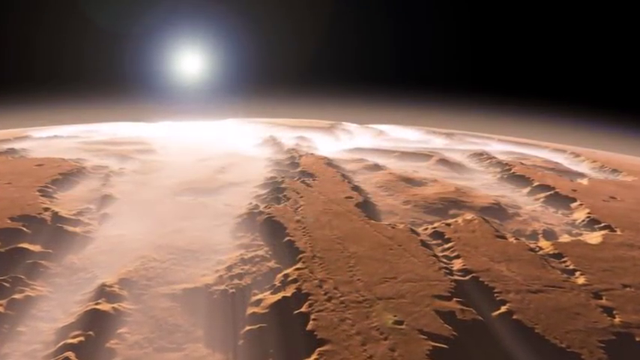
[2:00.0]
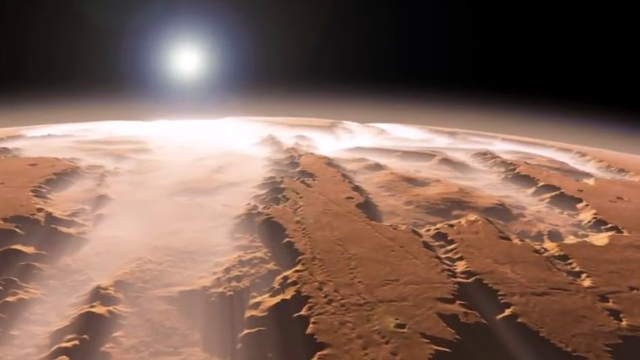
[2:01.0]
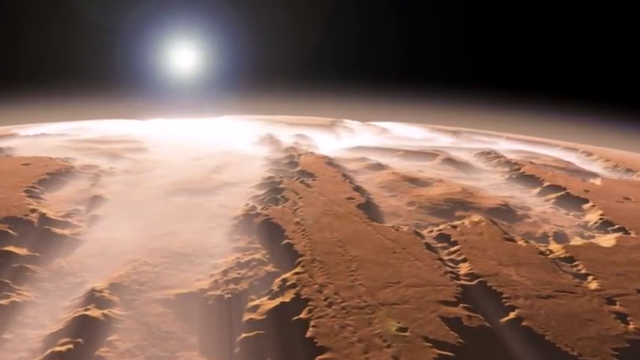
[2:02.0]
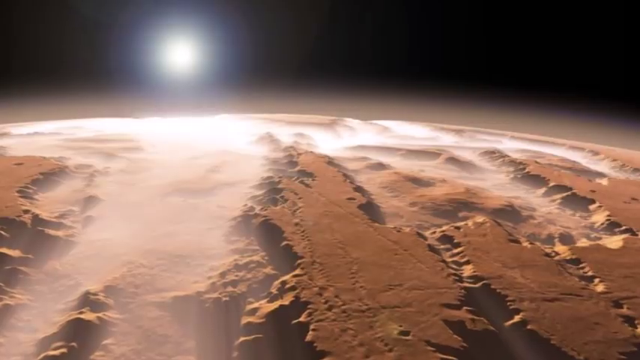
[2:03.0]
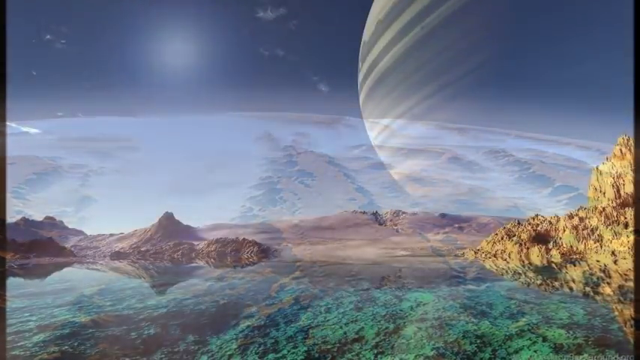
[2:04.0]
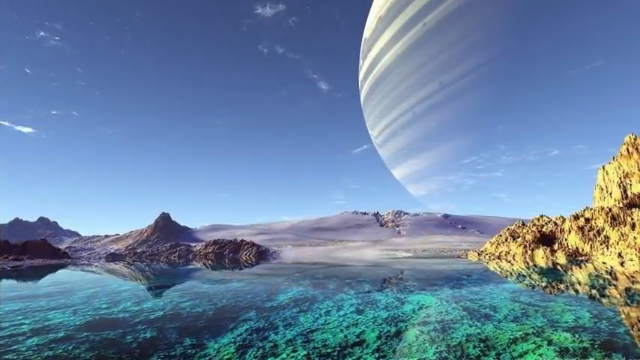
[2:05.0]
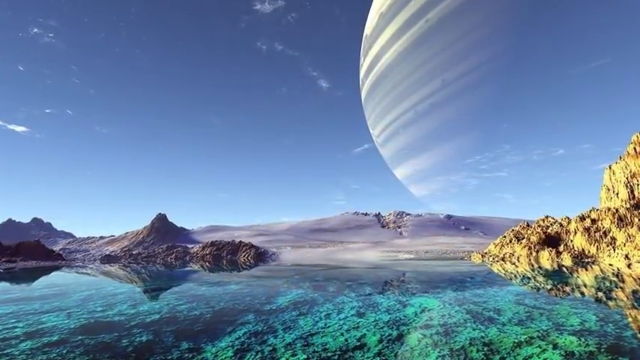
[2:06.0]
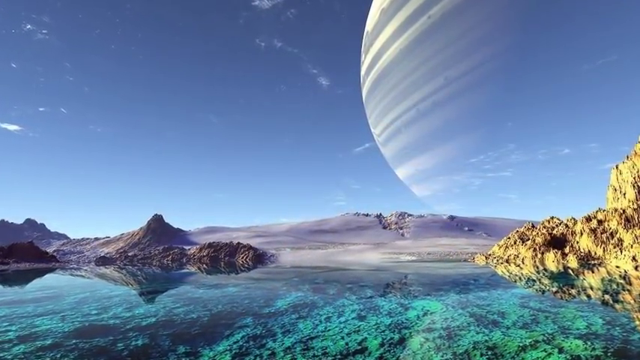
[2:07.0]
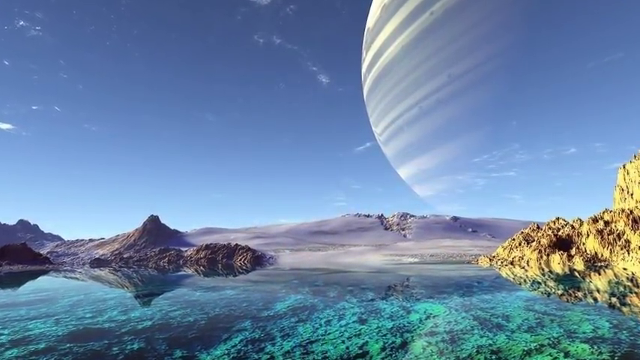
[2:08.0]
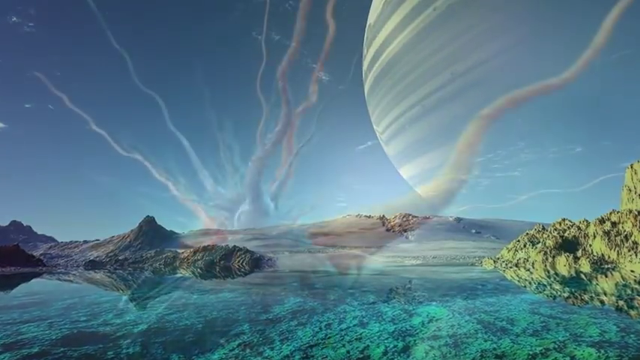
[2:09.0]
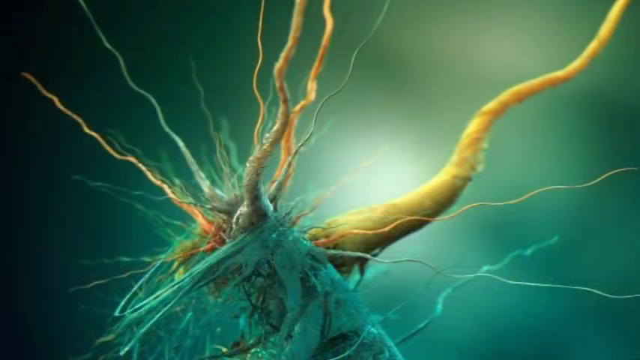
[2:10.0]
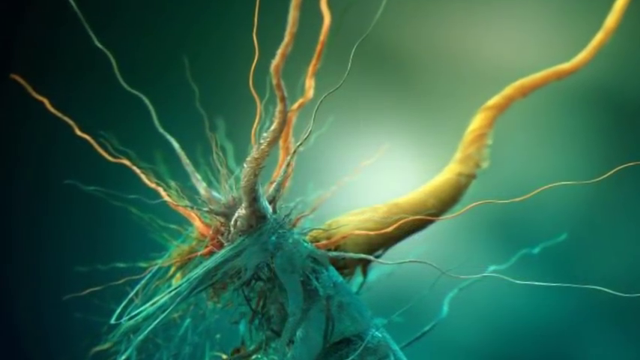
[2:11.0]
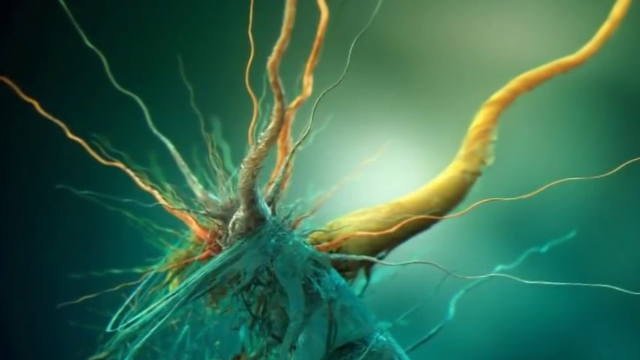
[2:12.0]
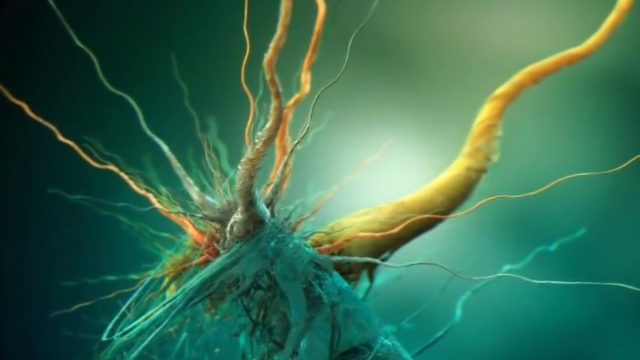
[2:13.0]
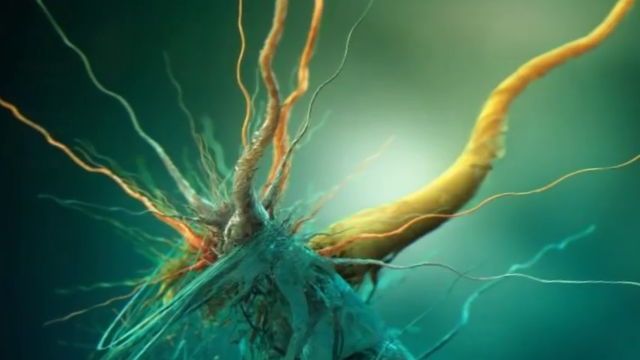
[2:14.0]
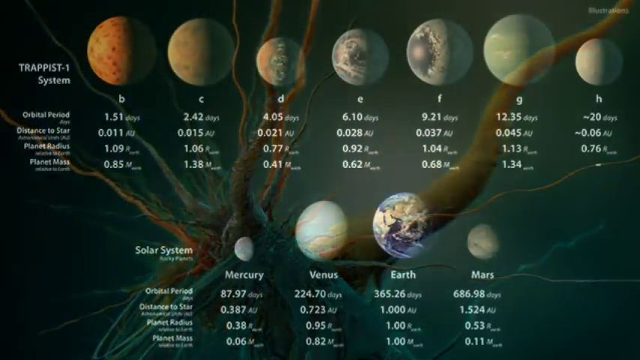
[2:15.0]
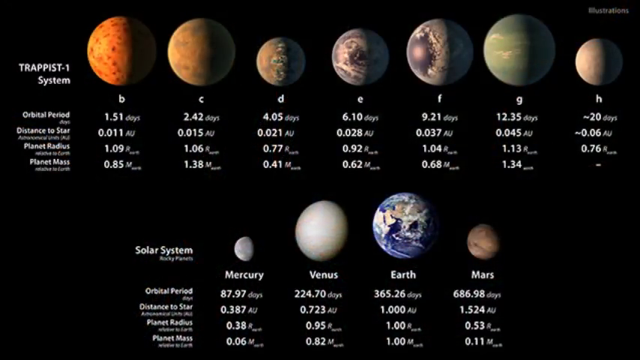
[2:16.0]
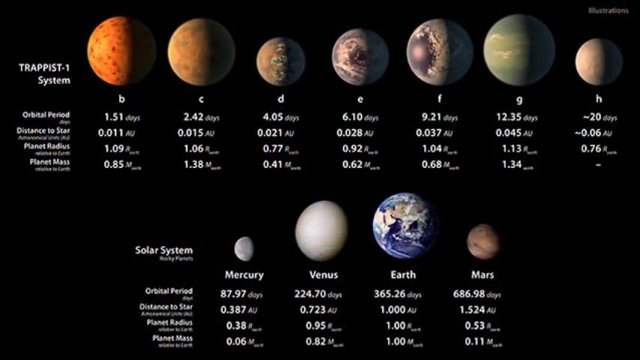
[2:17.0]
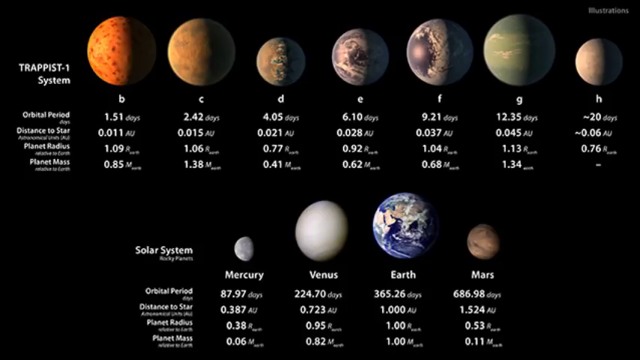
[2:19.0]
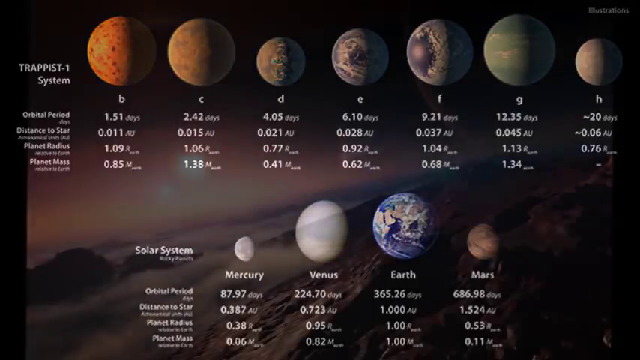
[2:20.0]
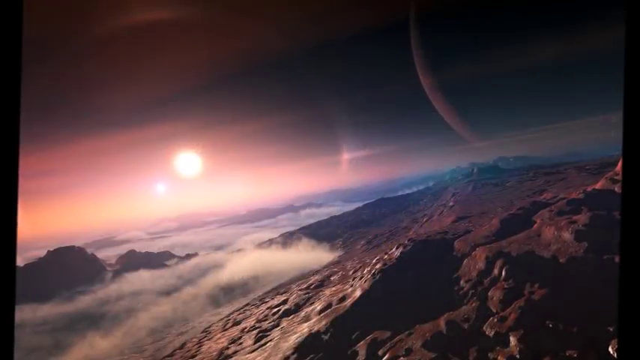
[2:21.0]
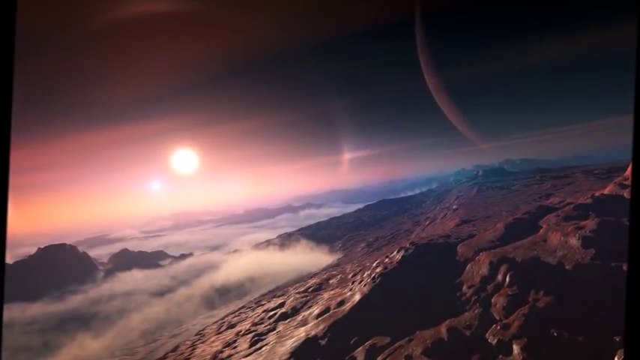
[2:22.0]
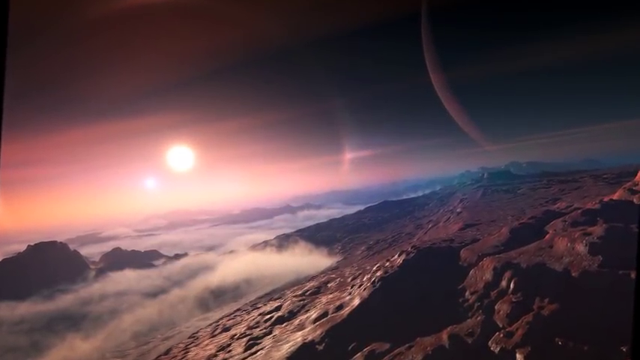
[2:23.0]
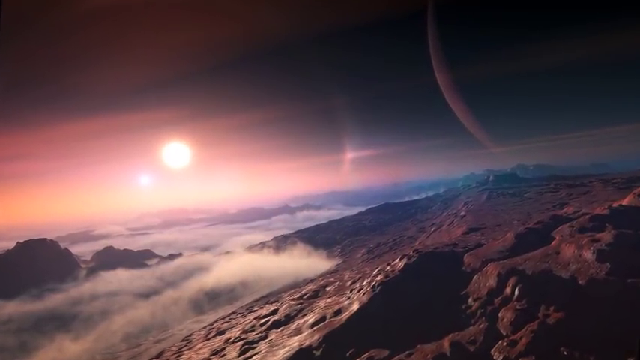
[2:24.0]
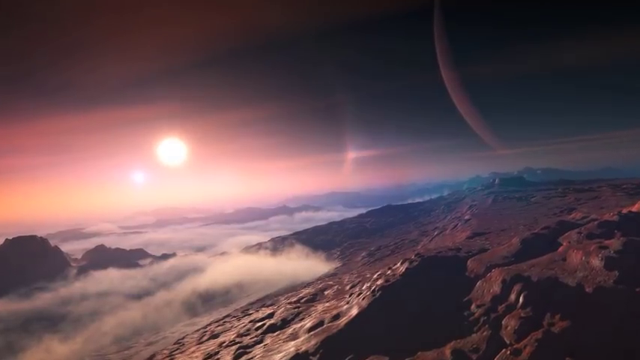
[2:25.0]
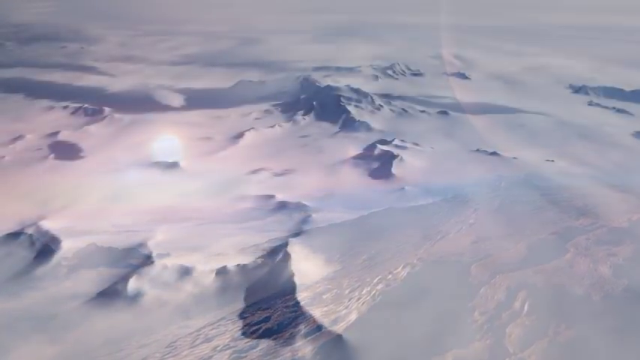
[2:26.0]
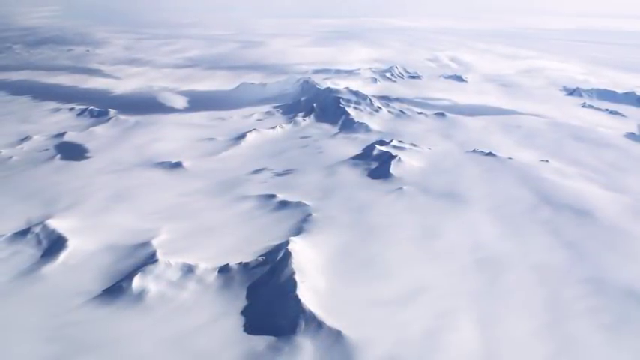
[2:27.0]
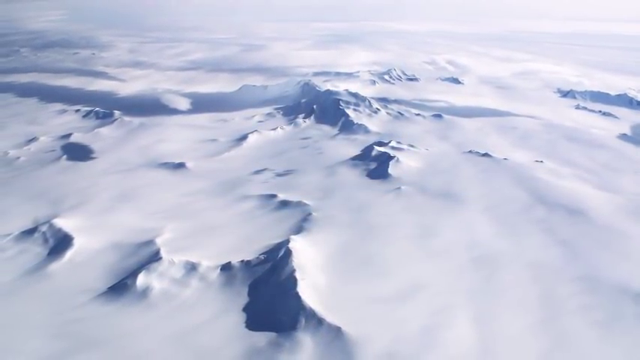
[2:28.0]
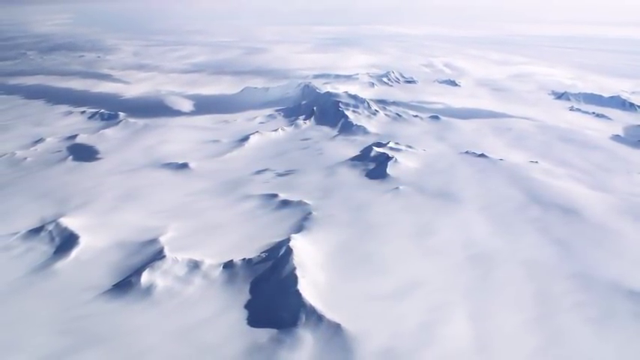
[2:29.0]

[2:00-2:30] The brown planet has clouds on it and holes, with the sun shining on it. Another photo shows a place with crystal clear blue water, yellow and brown stones and rocks, and a field made of what may be sand, with a planet in the sky on the right side. The strange creature appears again, made of blue, yellow, gray and some orange material with strange shapes. A comparison of the TRAPPIST-1 system, planets b, c, d, e, f, g and h, with the solar system's Mercury, Venus, Earth and Mars follows, listing values for orbital period, distance to star, planet radius and planet mass. Then comes another photo of a planet and a view from the sky down to Earth with clouds on it.